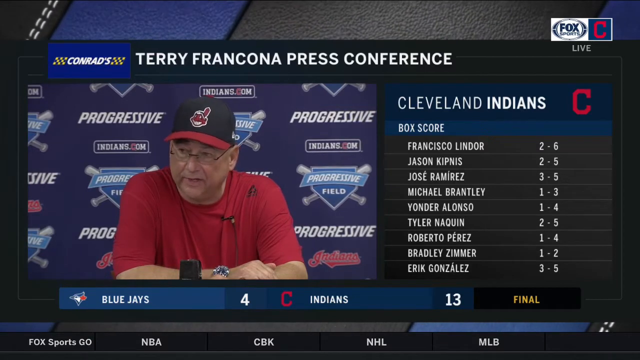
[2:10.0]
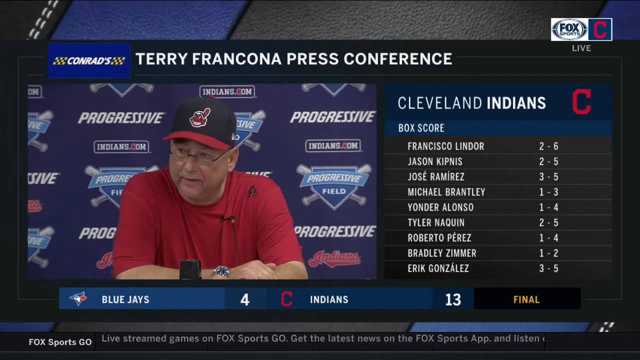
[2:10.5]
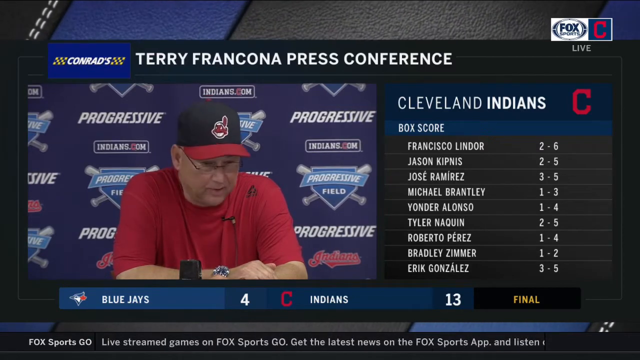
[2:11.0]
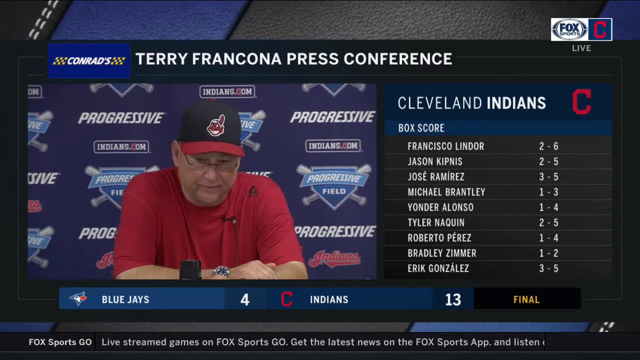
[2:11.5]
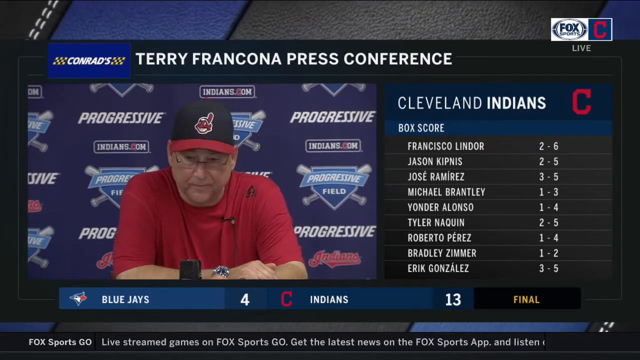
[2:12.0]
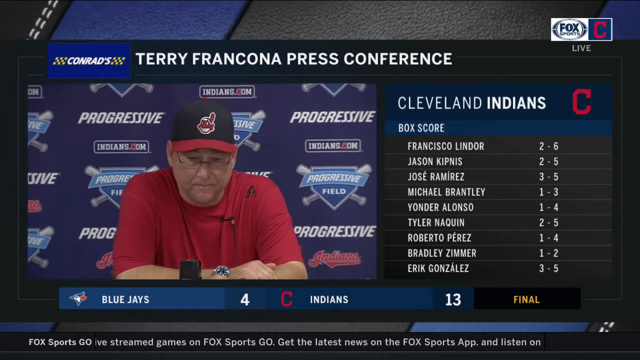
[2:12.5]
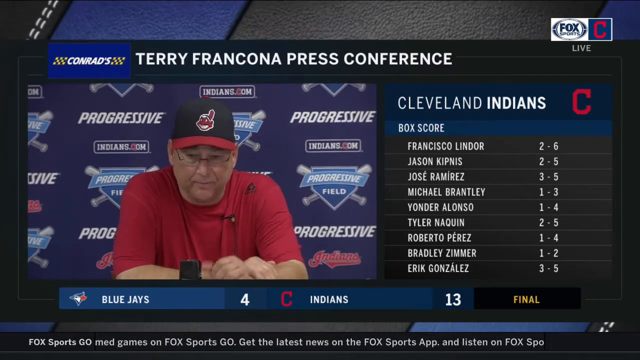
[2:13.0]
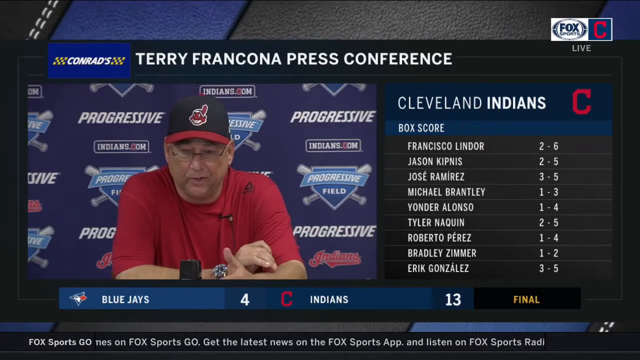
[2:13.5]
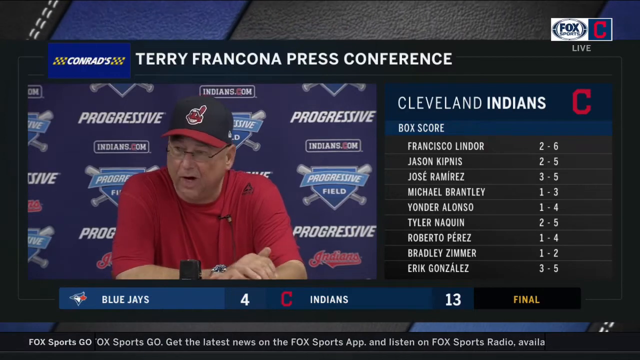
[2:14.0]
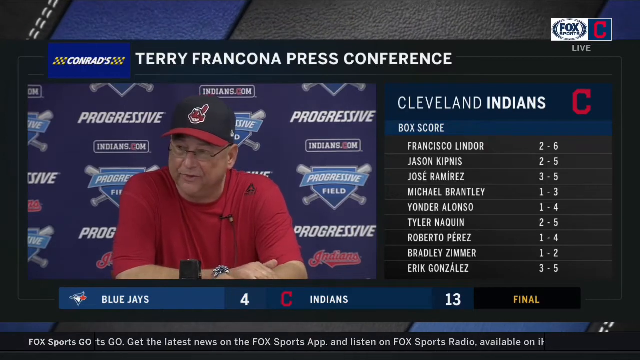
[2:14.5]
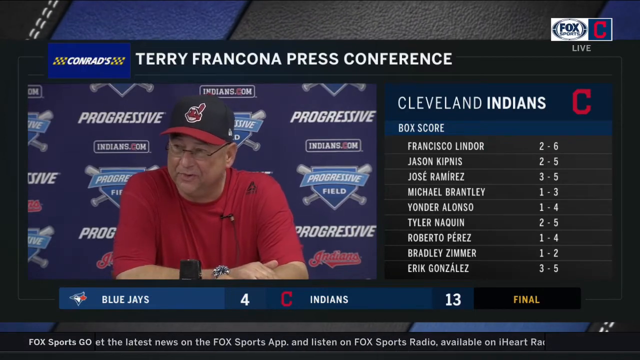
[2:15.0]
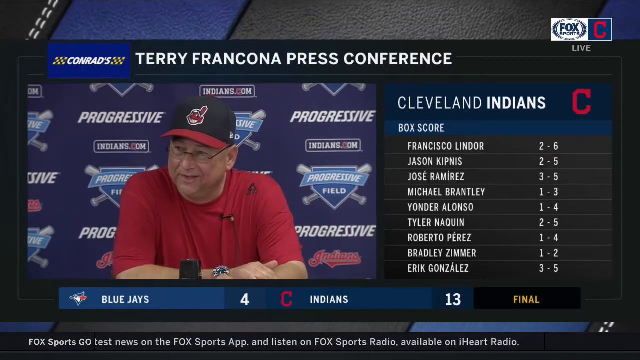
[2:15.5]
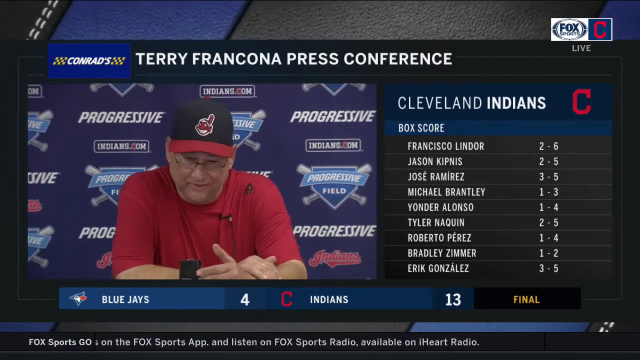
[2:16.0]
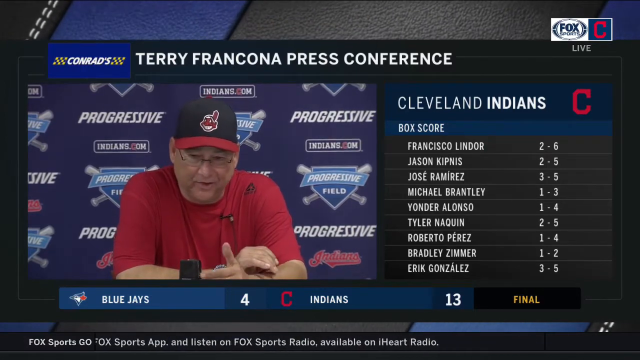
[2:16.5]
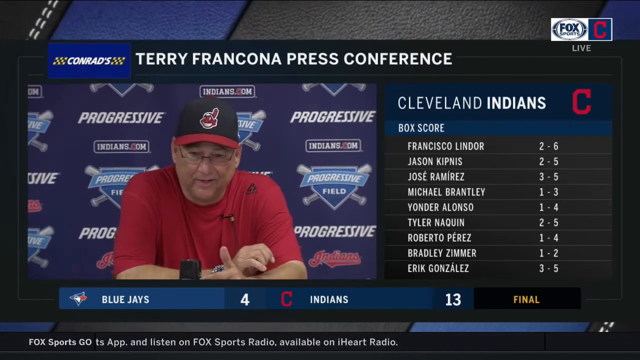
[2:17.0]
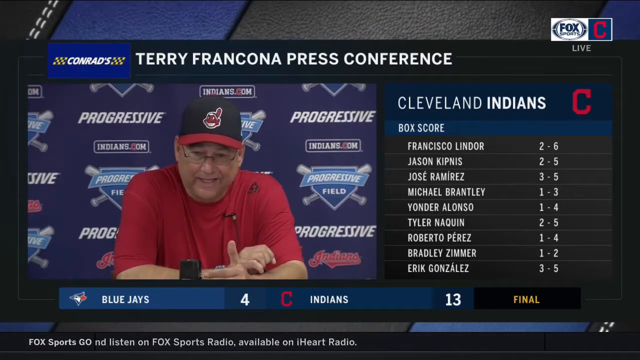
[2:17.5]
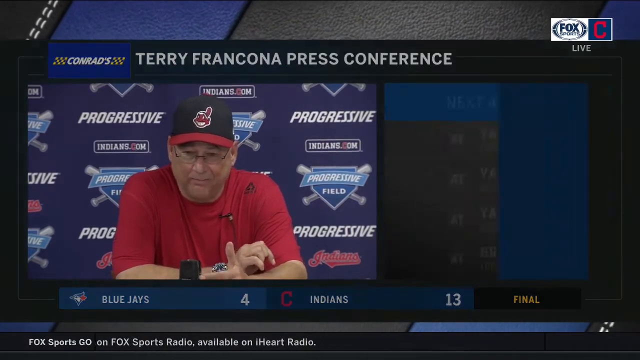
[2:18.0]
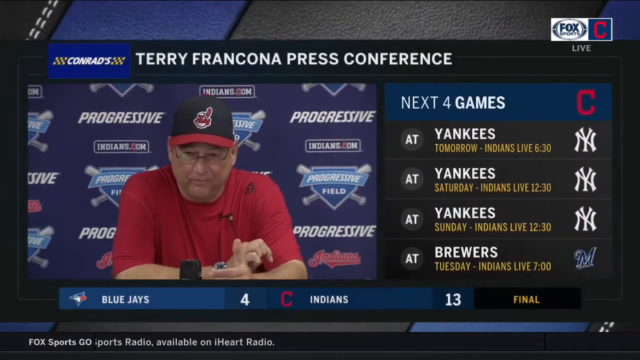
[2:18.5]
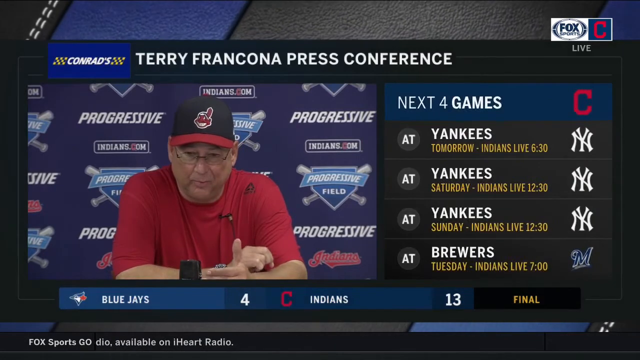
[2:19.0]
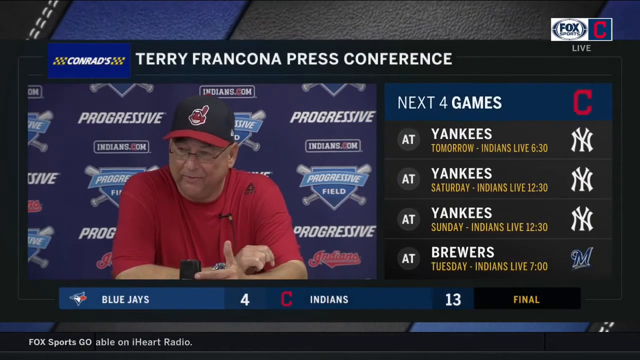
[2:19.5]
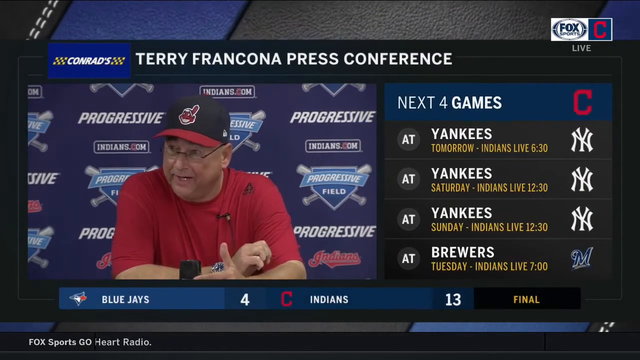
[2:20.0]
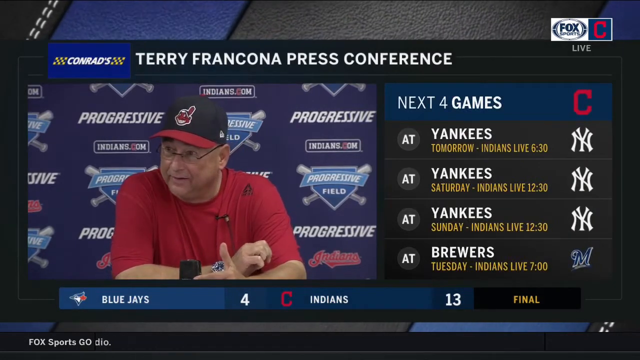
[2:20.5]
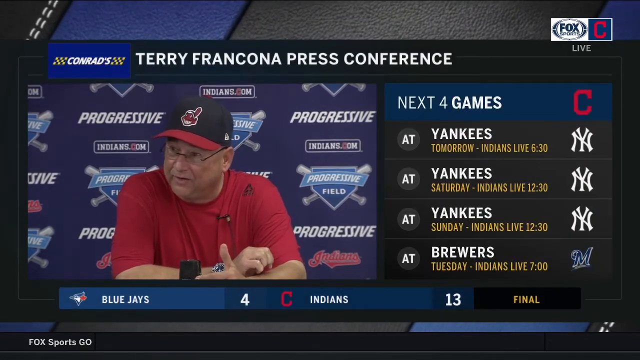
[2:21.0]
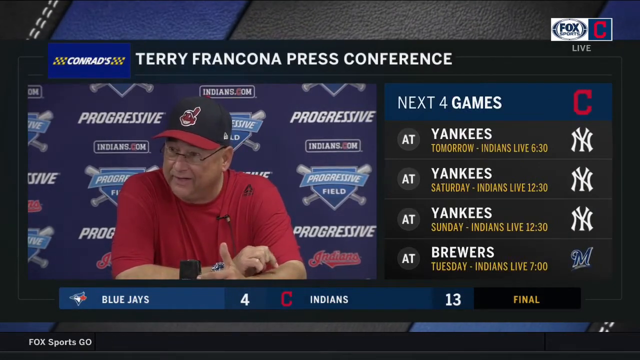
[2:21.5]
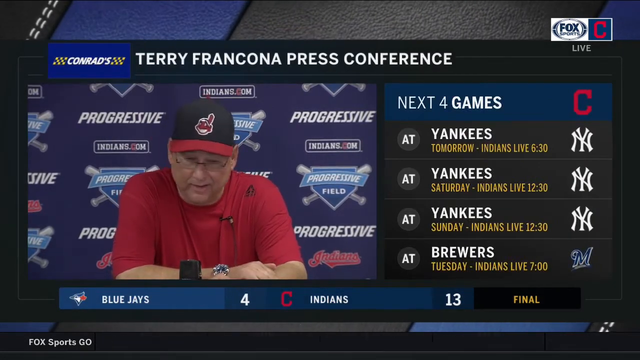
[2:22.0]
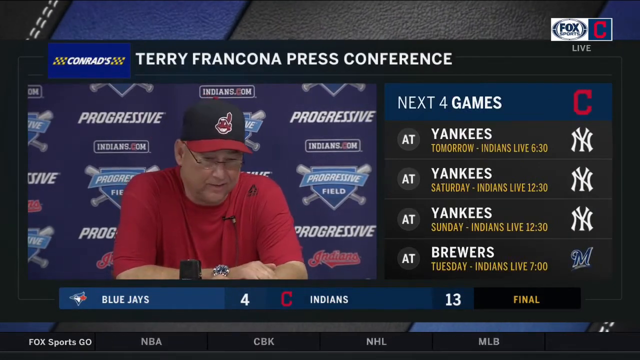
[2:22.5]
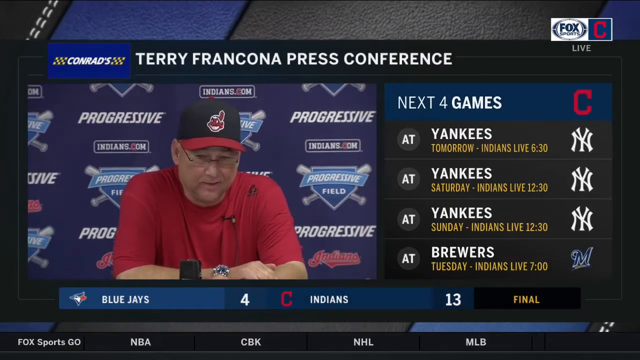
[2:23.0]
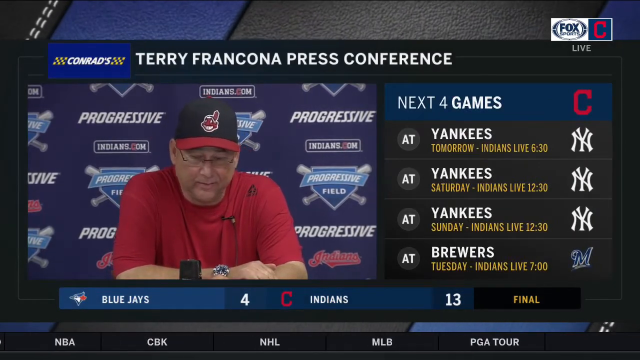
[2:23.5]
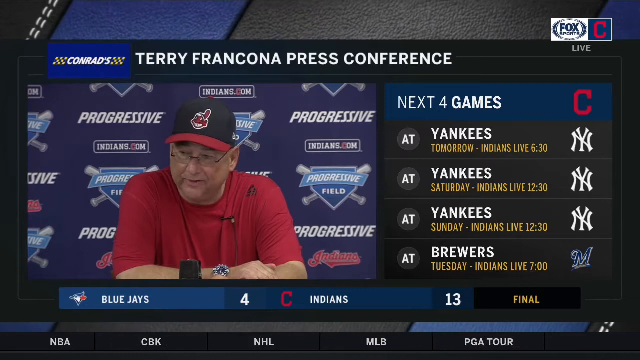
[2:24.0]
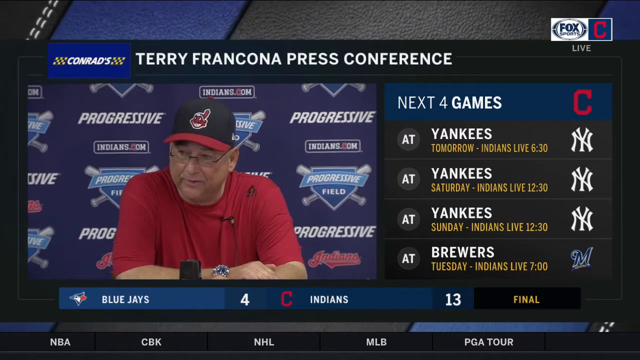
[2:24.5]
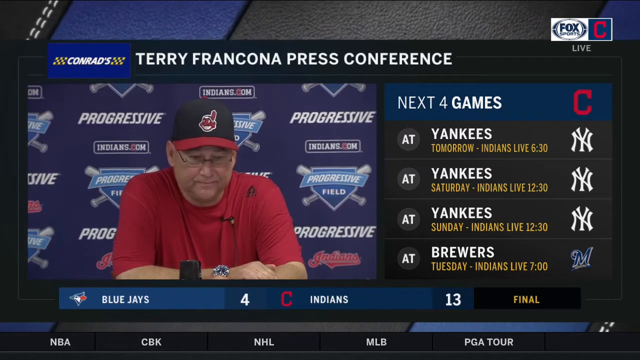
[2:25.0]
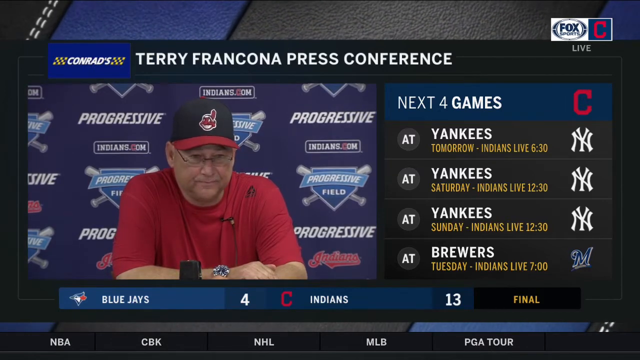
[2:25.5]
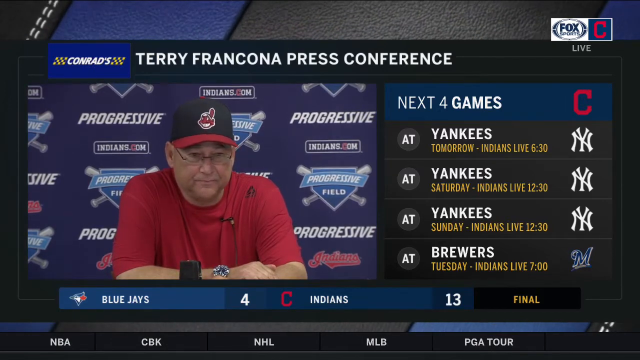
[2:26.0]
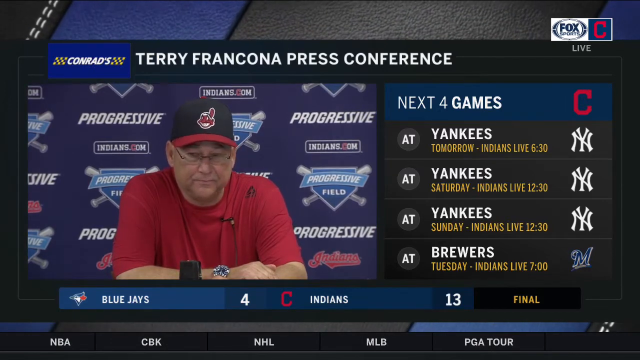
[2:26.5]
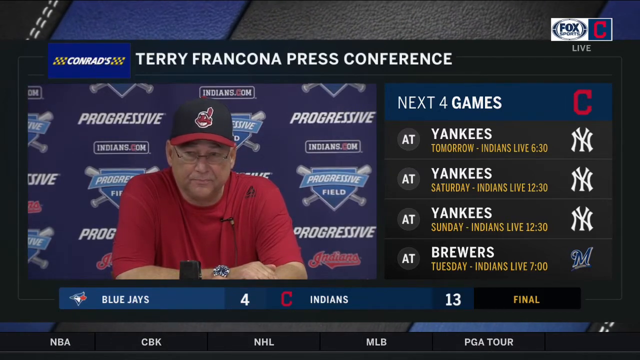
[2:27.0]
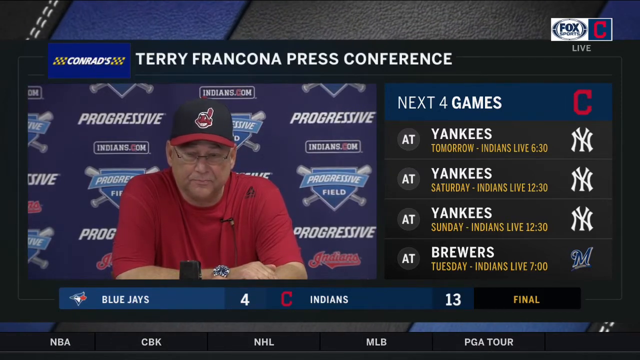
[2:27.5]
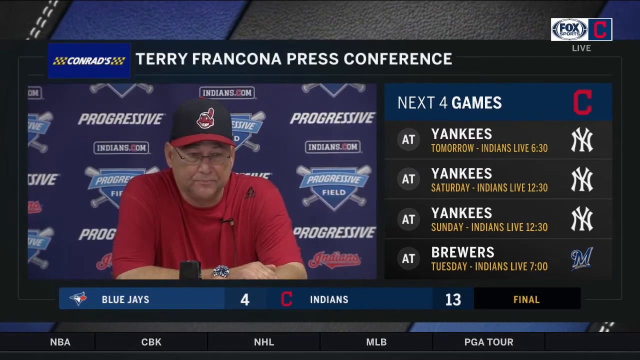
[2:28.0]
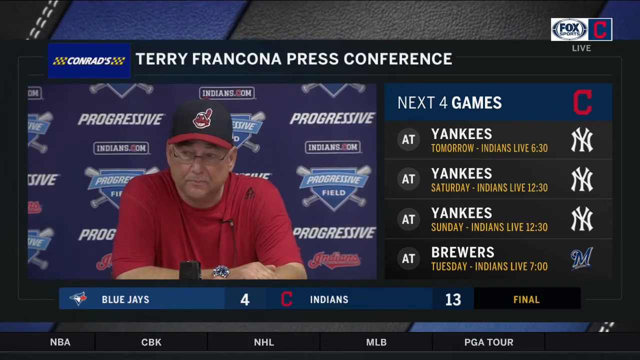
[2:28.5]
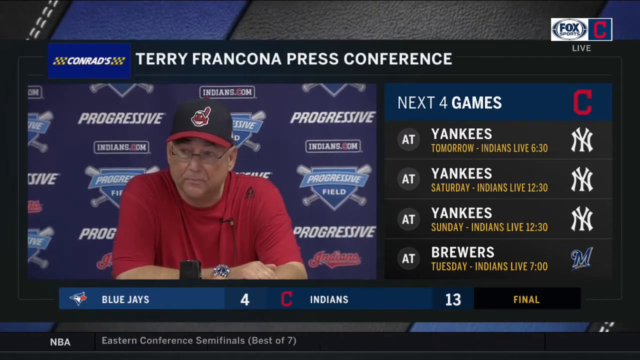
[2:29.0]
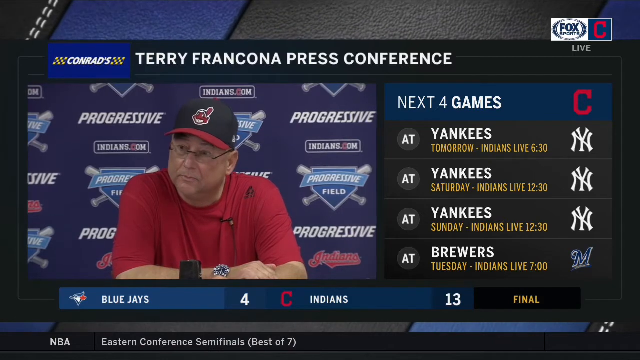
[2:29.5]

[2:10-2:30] The text reads "Terry Francona press conference." On the left is apparently Terry Francona, sitting in front of a backdrop like a wallpaper of companies that appear to be promoting at this sports event; it says "Progressive," and in some areas "Progressive Field" with baseballs, a logo designed for baseball. On the right side it says "Cleveland Indians box score," listing a few players in white font with numbers across from them, for example "Roberto Perez 1-4." At the bottom it reads "live stream games on Fox Sports Go get the latest news on Fox Sports app and listen on Fox Sports radio available on iHeart radio." Above that is the final score: Blue Jays 4, Indians 13.